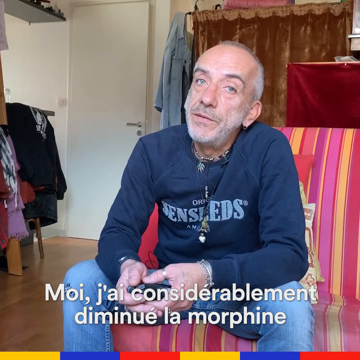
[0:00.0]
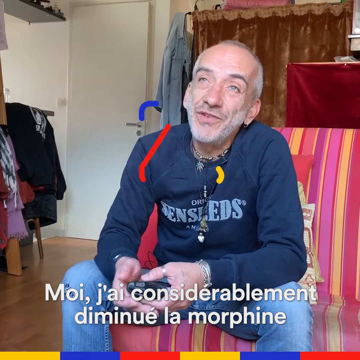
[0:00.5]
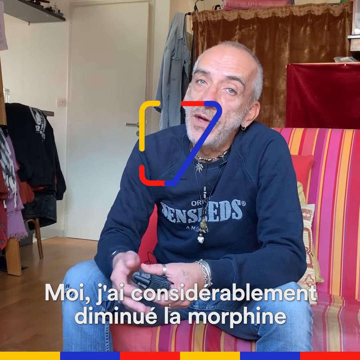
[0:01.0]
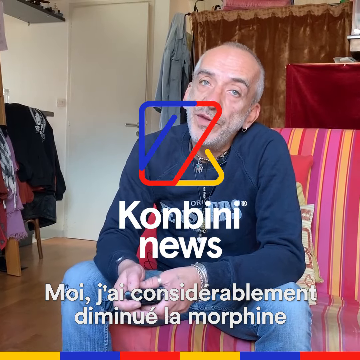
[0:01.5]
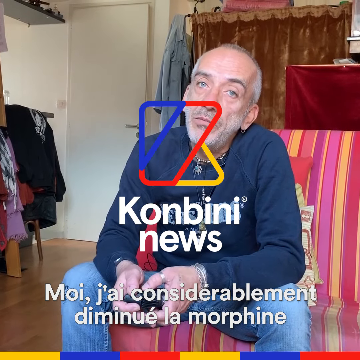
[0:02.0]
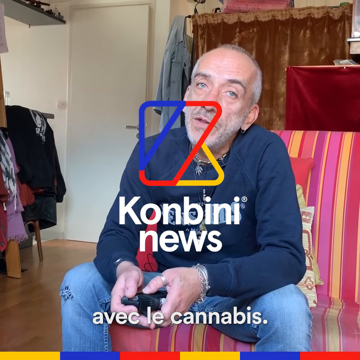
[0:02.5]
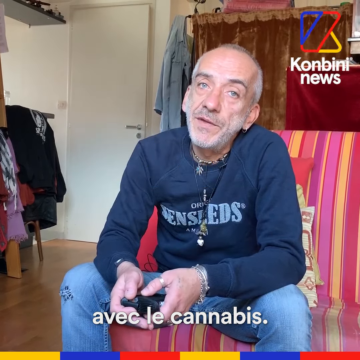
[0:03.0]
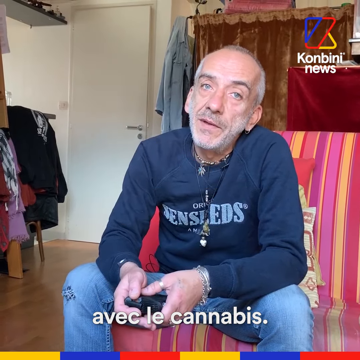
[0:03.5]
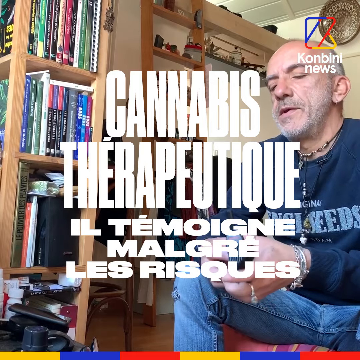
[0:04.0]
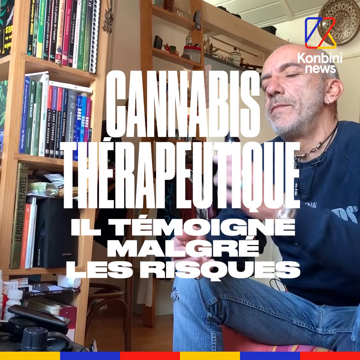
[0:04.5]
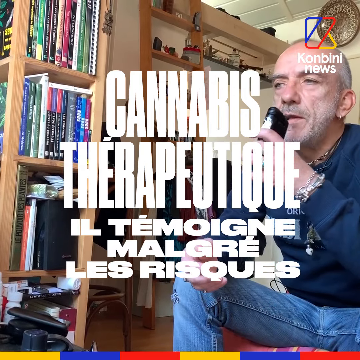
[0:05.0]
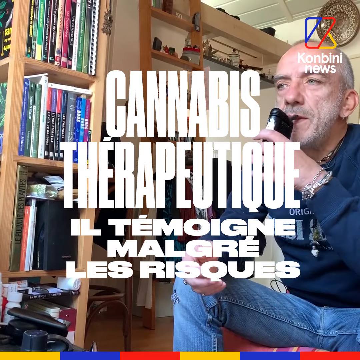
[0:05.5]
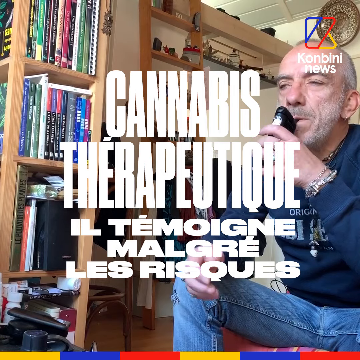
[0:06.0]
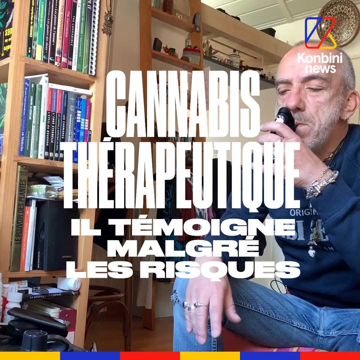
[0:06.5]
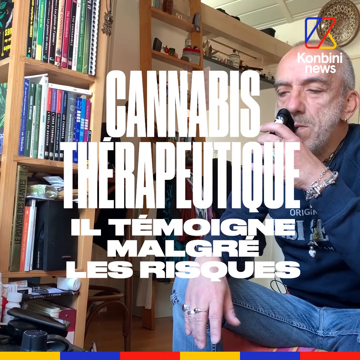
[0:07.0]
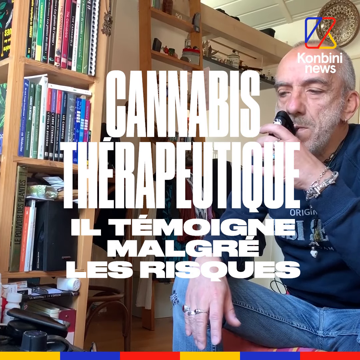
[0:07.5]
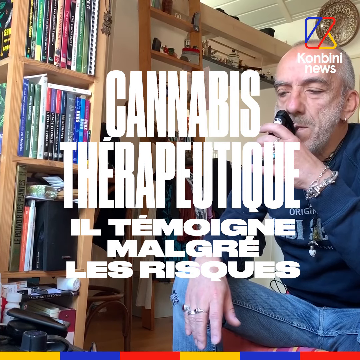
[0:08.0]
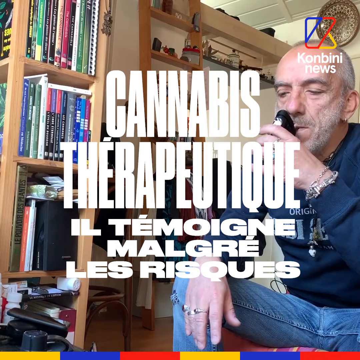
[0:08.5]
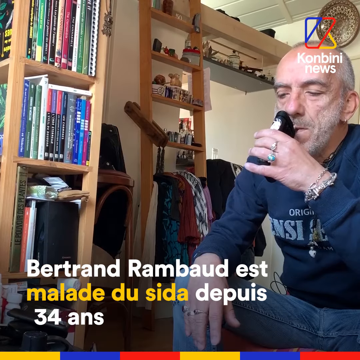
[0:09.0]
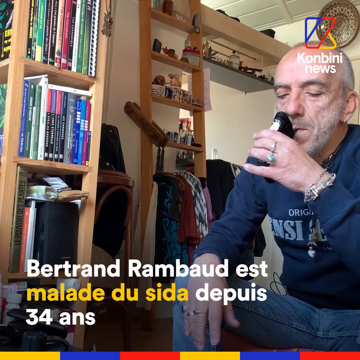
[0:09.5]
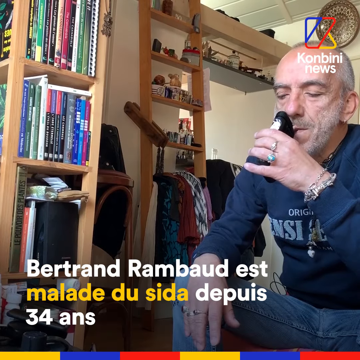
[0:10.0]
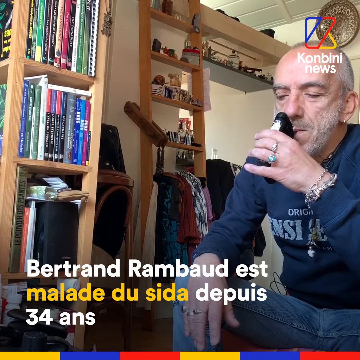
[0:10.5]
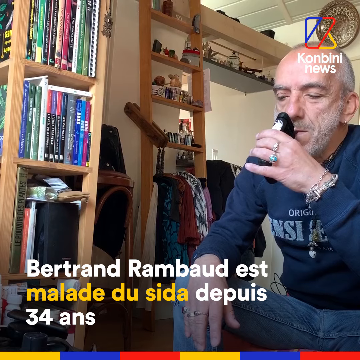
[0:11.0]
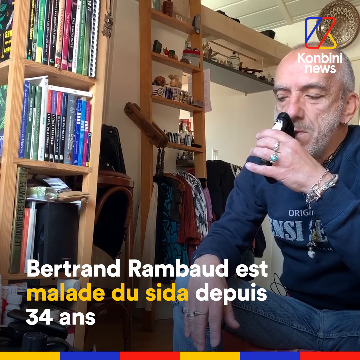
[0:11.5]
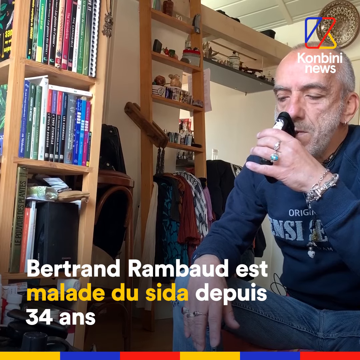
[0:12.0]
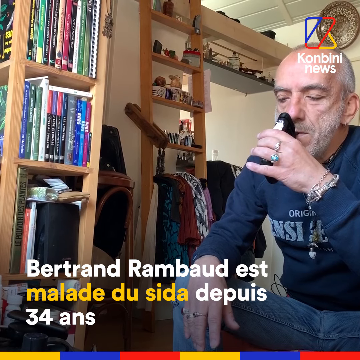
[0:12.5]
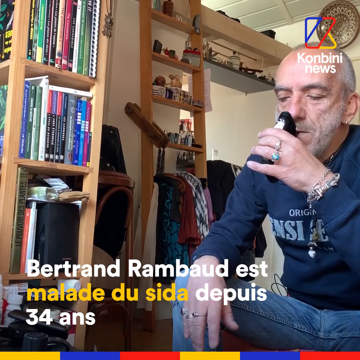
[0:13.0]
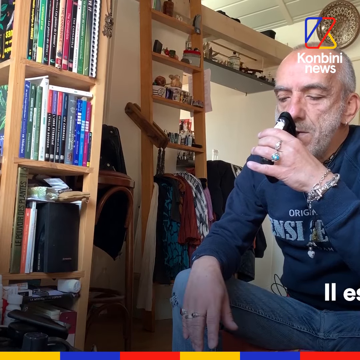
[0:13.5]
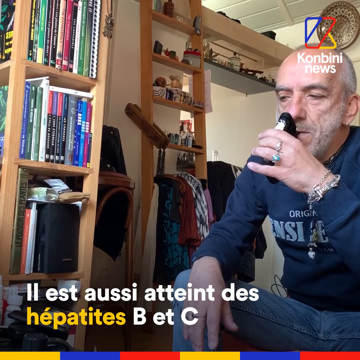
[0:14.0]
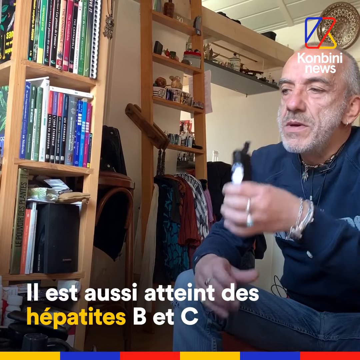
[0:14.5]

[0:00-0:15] A man is talking, with the Konbini News logo on screen. Text reading "cannabis for therapeutic" appears, apparently in Spanish. The man takes a big inhale on a pipe or something similar, and he keeps talking and inhaling. The background looks like an apartment building, with books and bookcases around him. He is an older man, probably in his 60s, wearing a blue shirt and blue jeans. The walls are white and the floors are hardwood. There is natural wood shelving holding books, clothes hanging, and tiny objects on the shelf. He wears a lot of rings on his fingers, bracelets, and a necklace, and his hair is very close shaved. There is white lettering on his navy blue t-shirt. The Konbini logo keeps showing up in the bottom right-hand corner.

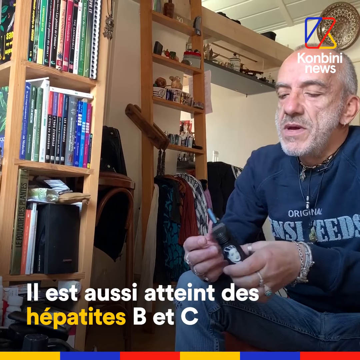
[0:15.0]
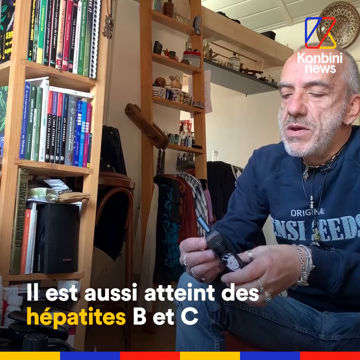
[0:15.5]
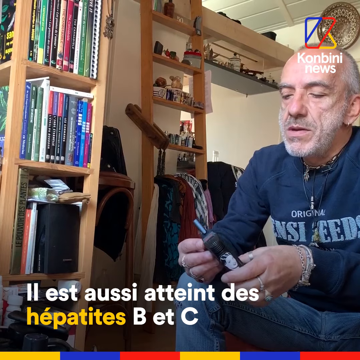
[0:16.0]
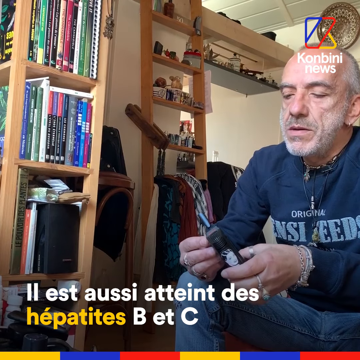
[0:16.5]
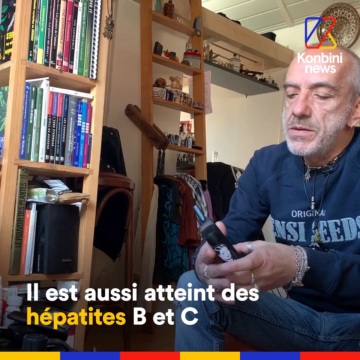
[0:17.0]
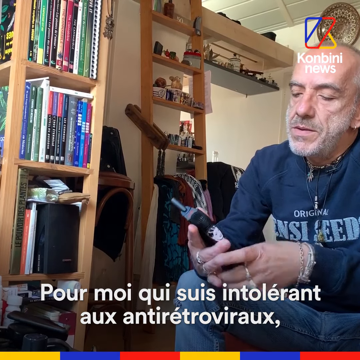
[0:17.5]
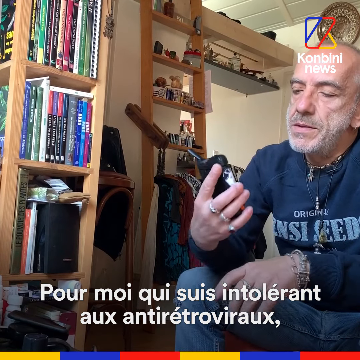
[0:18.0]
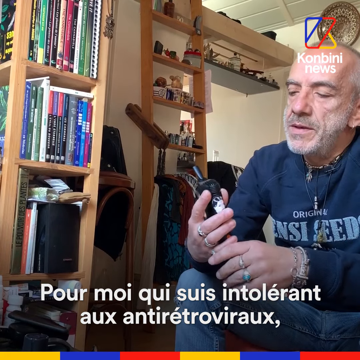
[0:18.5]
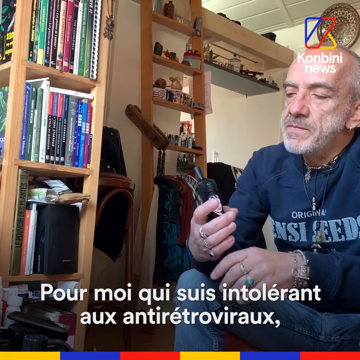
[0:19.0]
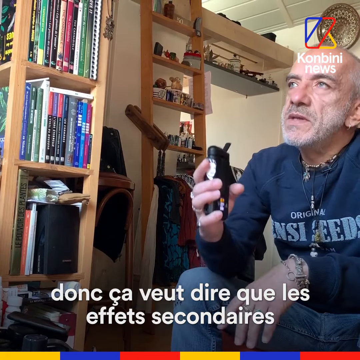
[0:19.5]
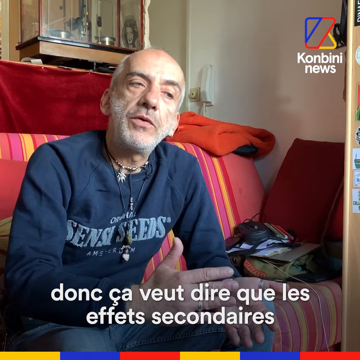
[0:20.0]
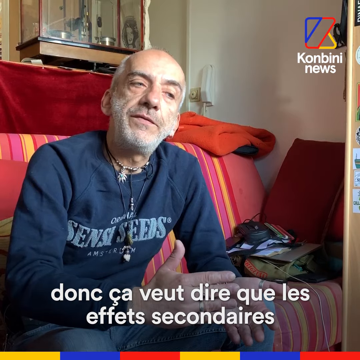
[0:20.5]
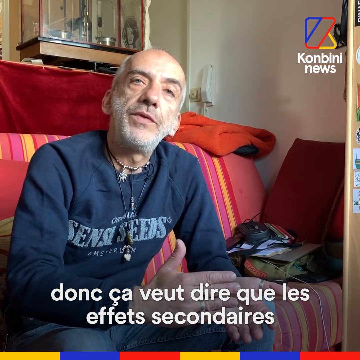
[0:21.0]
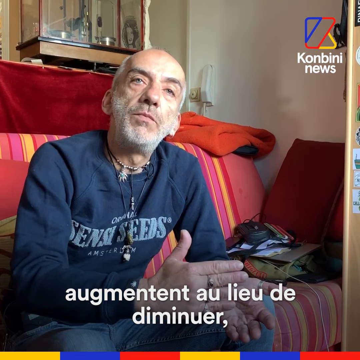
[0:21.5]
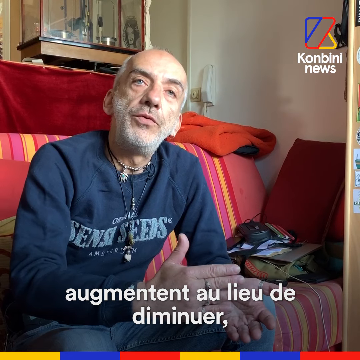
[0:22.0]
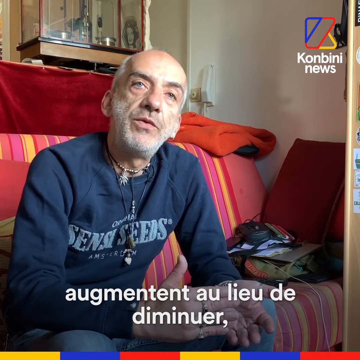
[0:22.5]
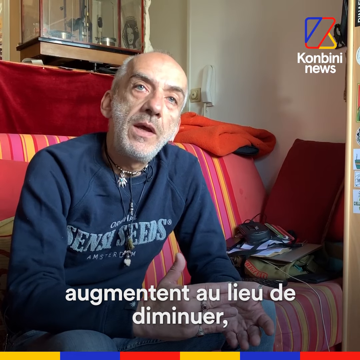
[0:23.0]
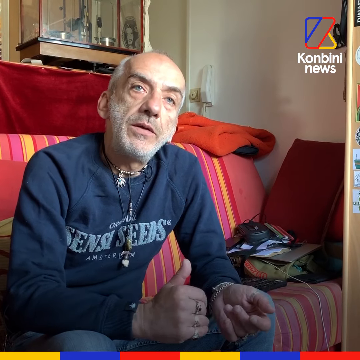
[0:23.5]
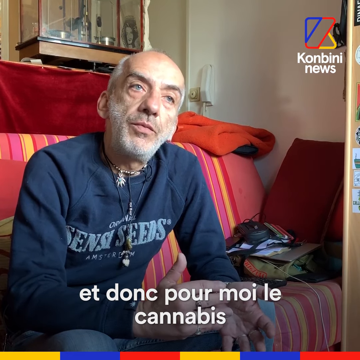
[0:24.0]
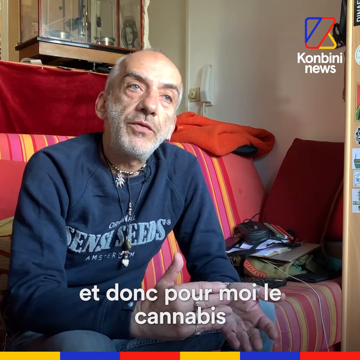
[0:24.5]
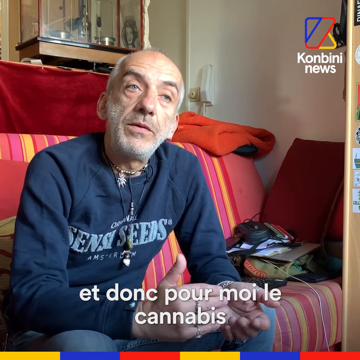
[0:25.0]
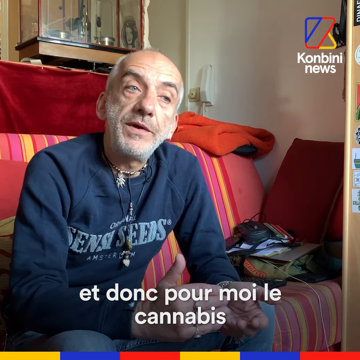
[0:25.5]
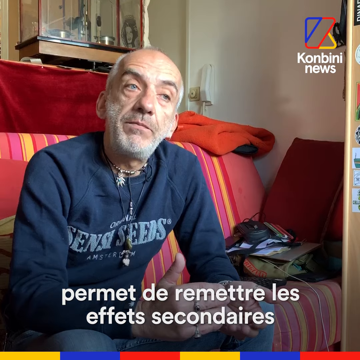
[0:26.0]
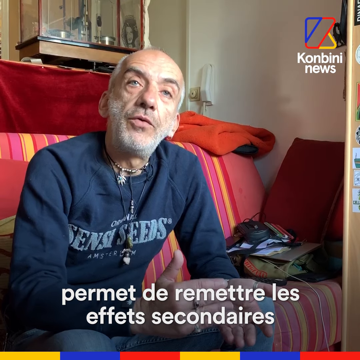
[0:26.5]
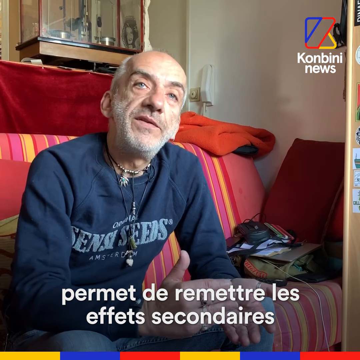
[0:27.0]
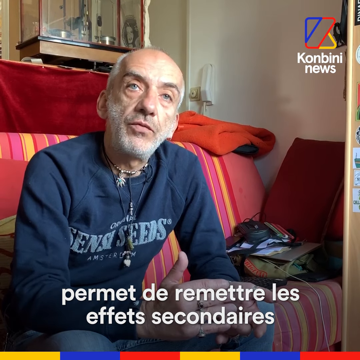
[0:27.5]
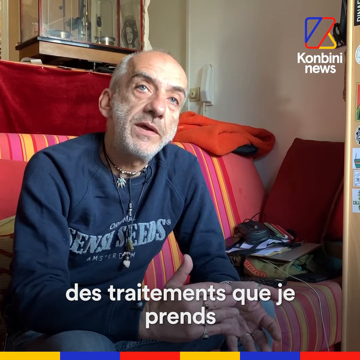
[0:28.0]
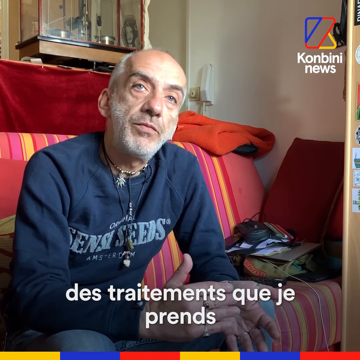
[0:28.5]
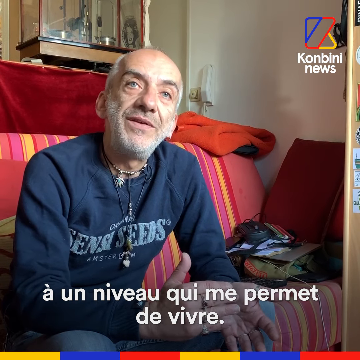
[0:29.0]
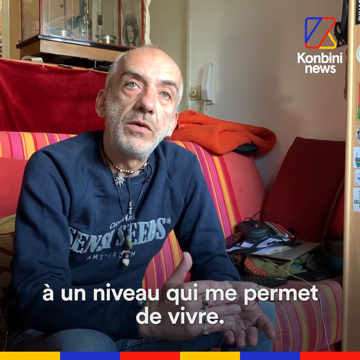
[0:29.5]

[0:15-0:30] The Konbini logo is in the bottom right-hand corner. The scene is the same, with the camera angle changing a little. The same man sits on a striped pink, red and yellow sofa, talking and gesturing with his hands. He holds something that looks like a pipe with the face of a woman on it. The language appears to be either French or Spanish. The camera kind of flips from left to right, and he seems to be talking about his pipe; then he shows how he uses it. An orange blanket is on the back of the sofa. From the different angle, a few objects can be seen on the sofa in the far corner. There is a telephone on the wall and a glass object up behind his head. The Konbini logo appears in blue, red and yellow in the upper right-hand corner, and also in the bottom right-hand corner. Bands of color run along the very bottom of the image: yellow, blue, red, yellow, blue, red. A lot of natural light comes in through the window.